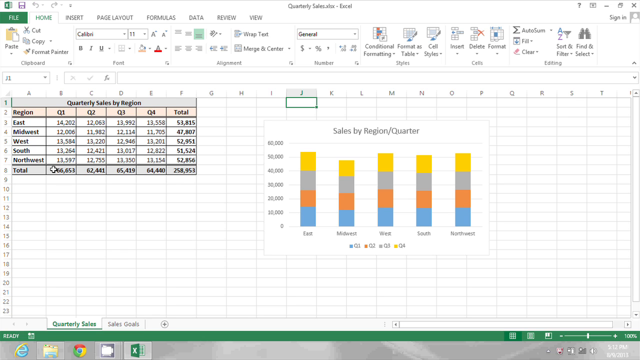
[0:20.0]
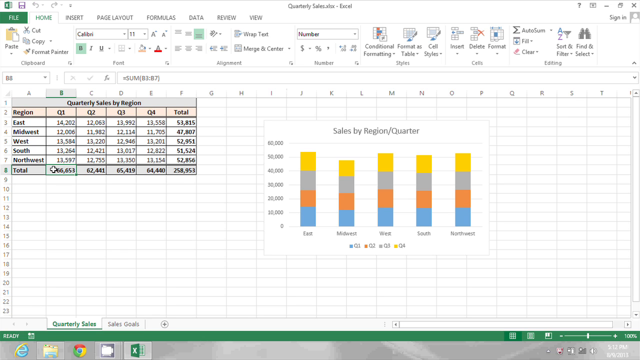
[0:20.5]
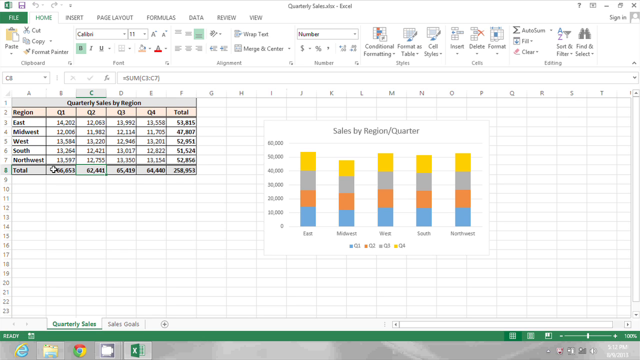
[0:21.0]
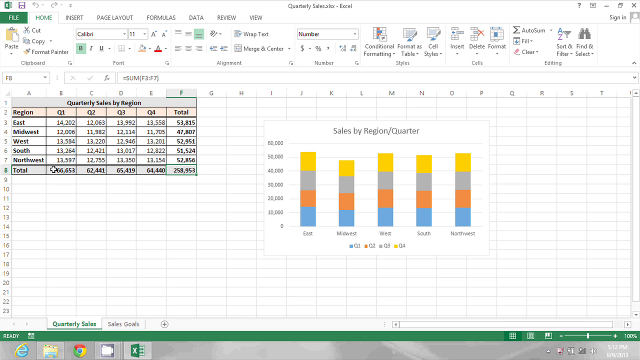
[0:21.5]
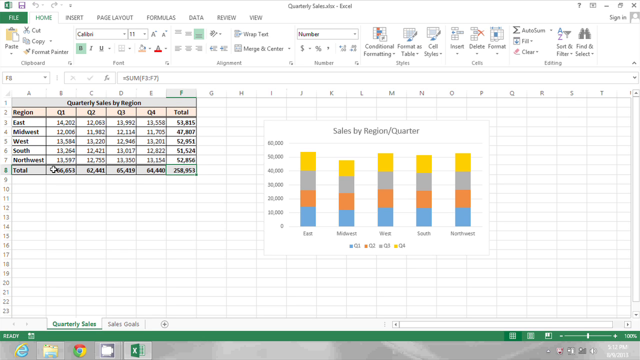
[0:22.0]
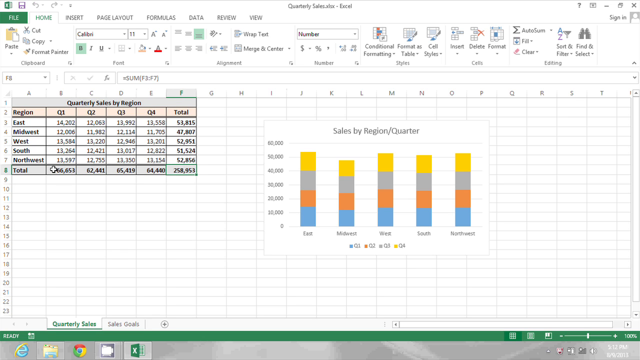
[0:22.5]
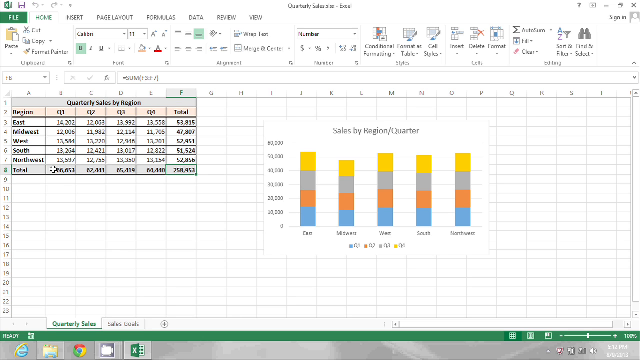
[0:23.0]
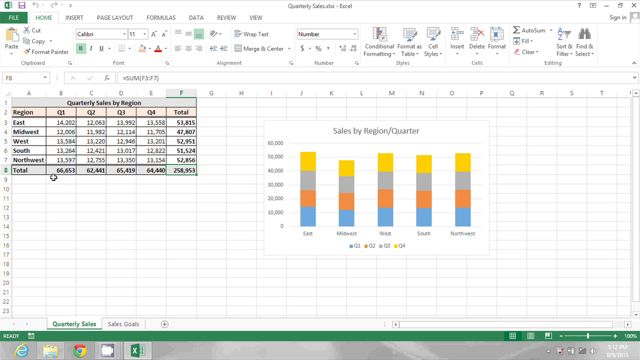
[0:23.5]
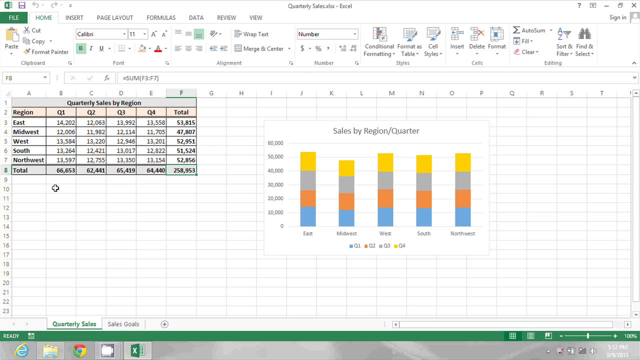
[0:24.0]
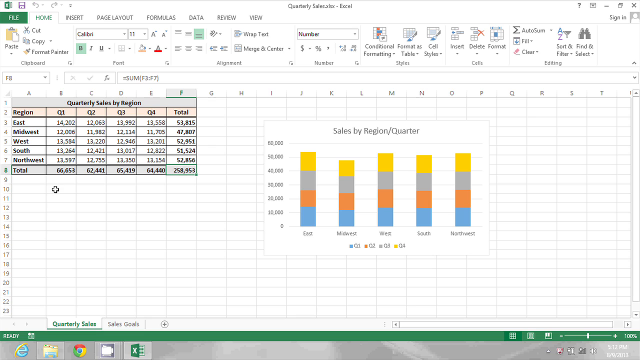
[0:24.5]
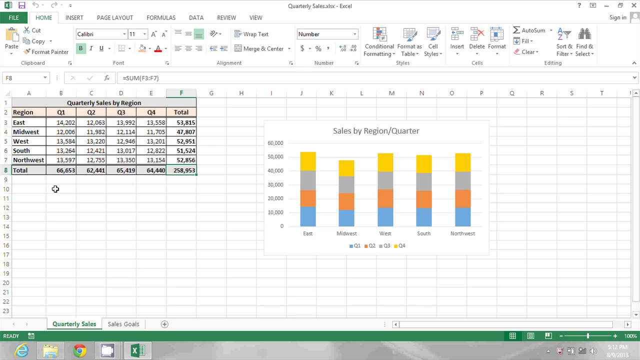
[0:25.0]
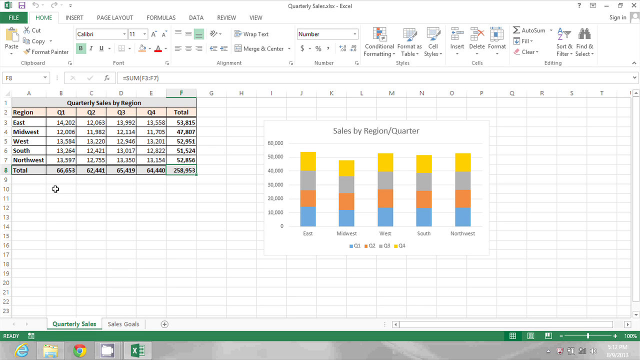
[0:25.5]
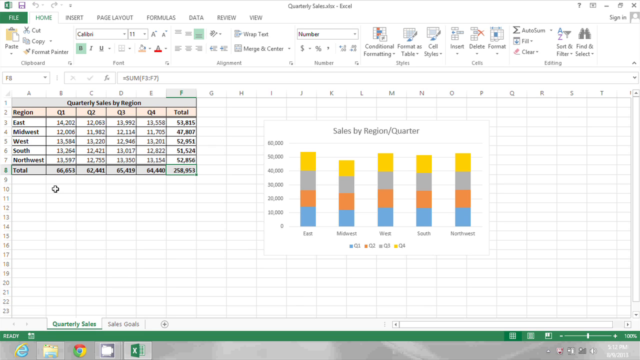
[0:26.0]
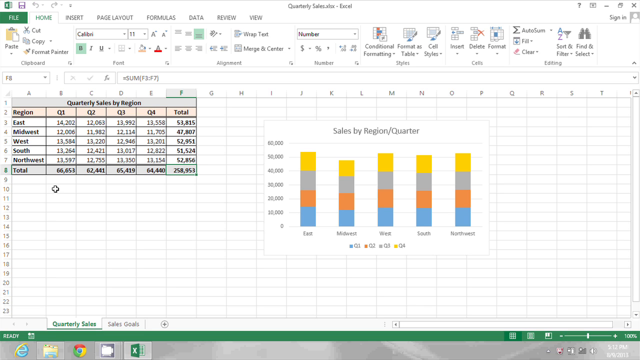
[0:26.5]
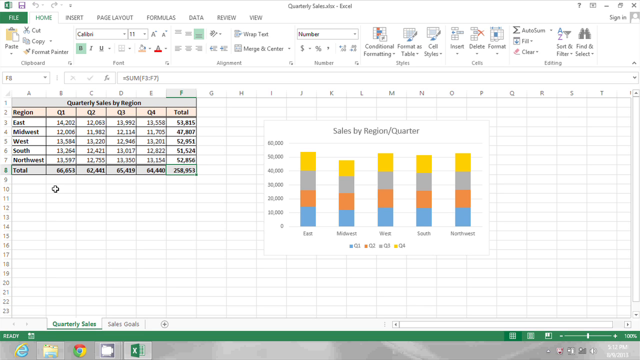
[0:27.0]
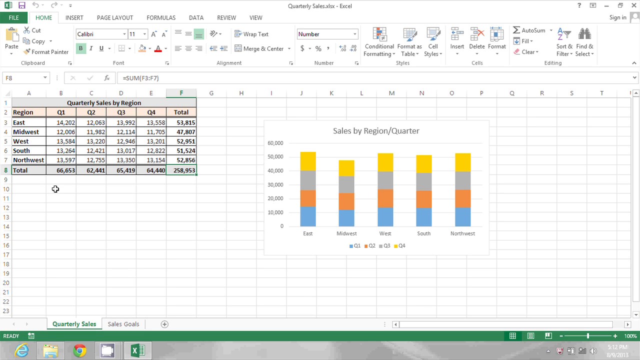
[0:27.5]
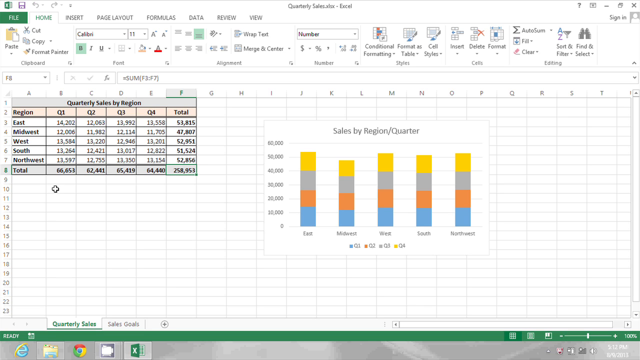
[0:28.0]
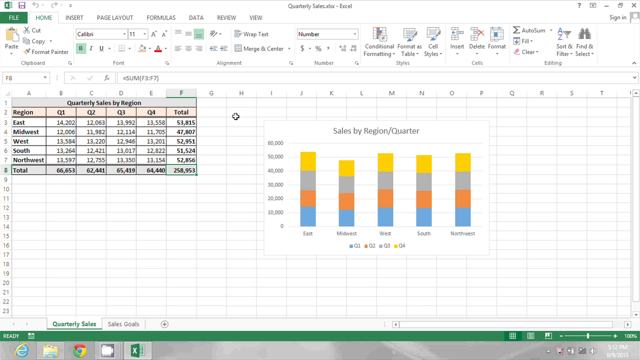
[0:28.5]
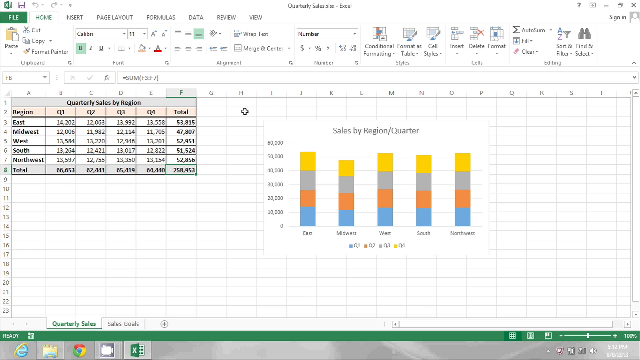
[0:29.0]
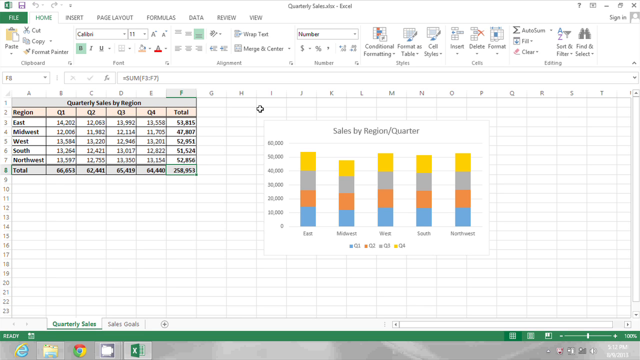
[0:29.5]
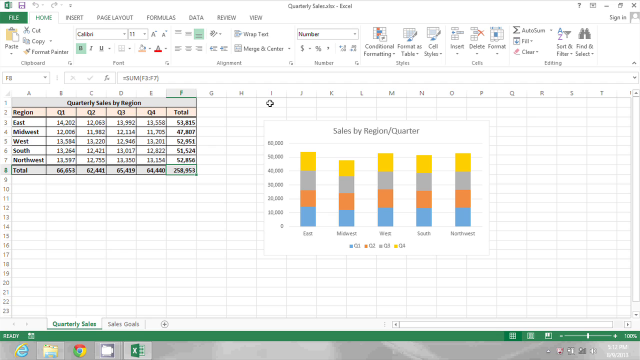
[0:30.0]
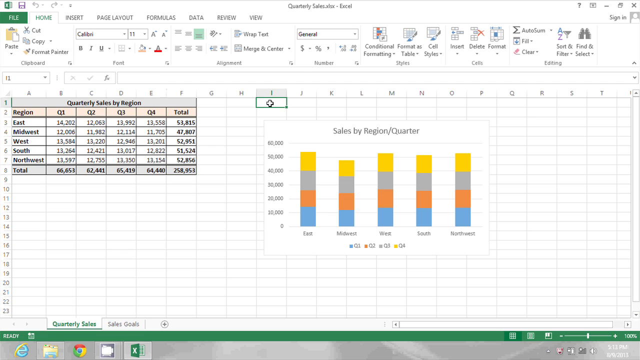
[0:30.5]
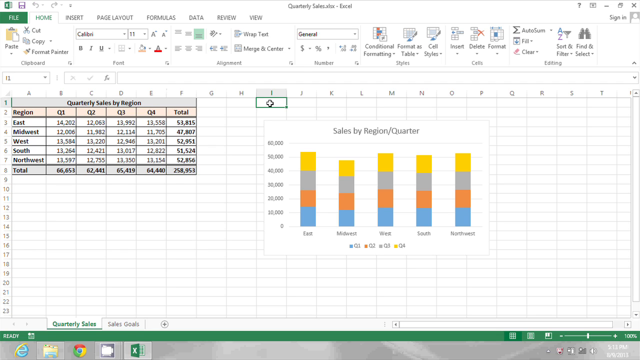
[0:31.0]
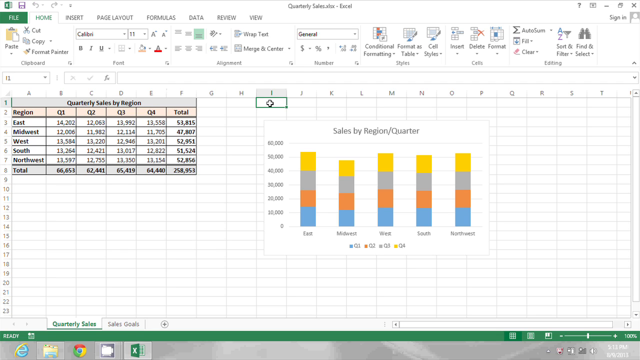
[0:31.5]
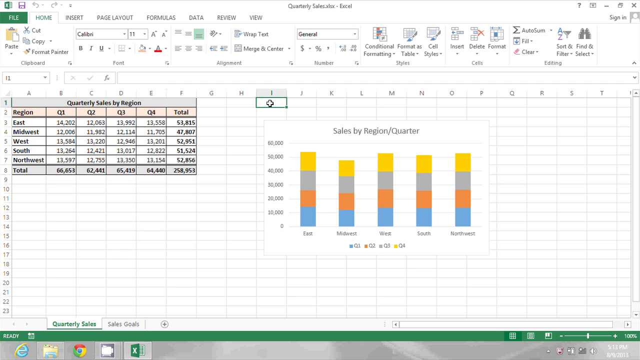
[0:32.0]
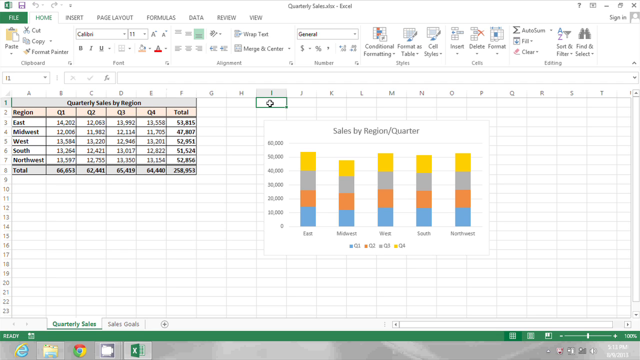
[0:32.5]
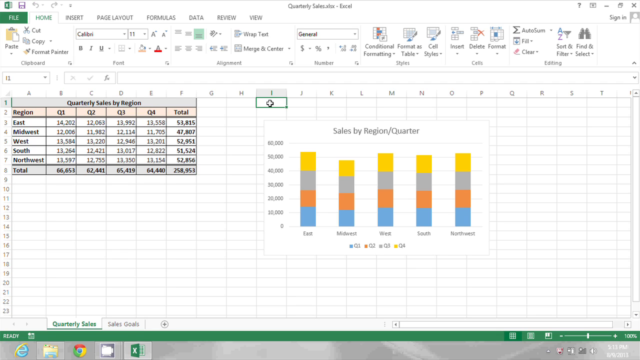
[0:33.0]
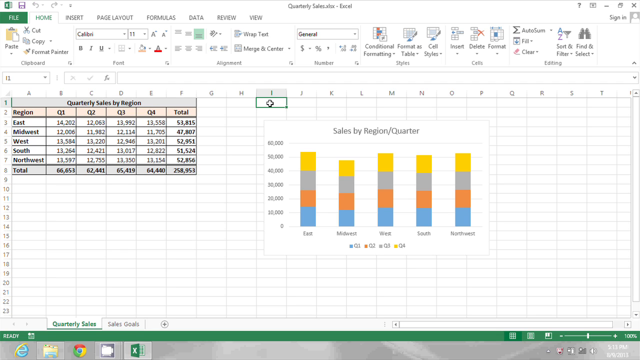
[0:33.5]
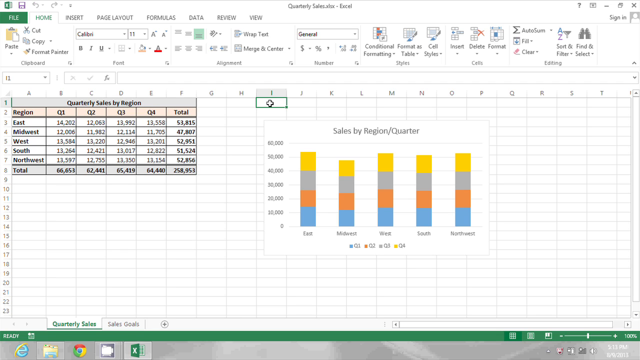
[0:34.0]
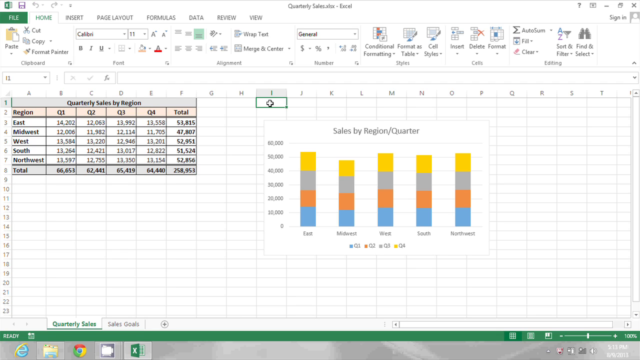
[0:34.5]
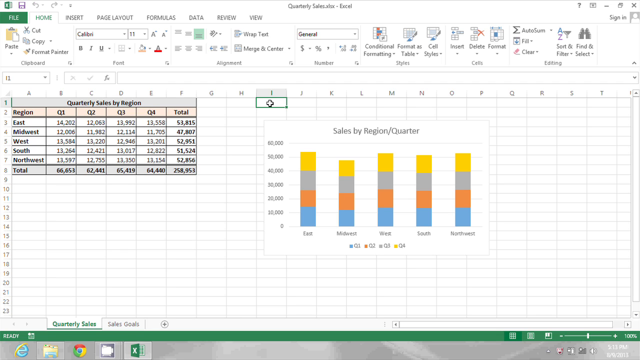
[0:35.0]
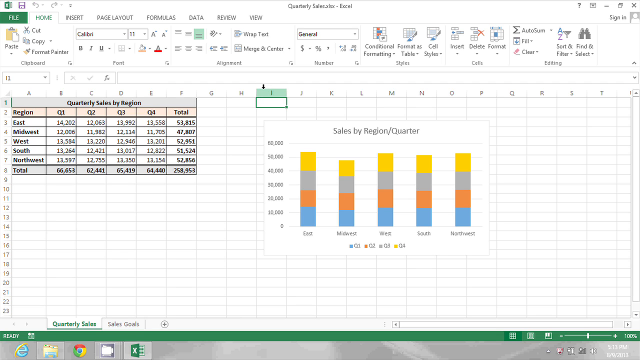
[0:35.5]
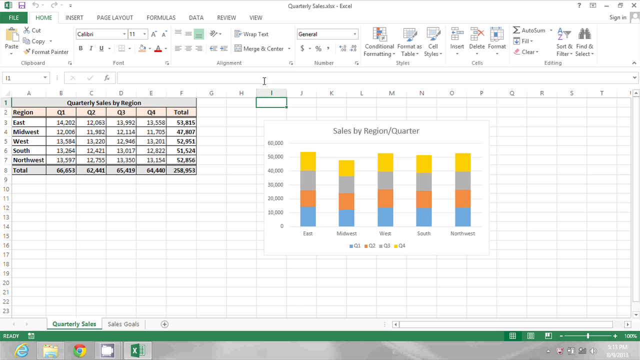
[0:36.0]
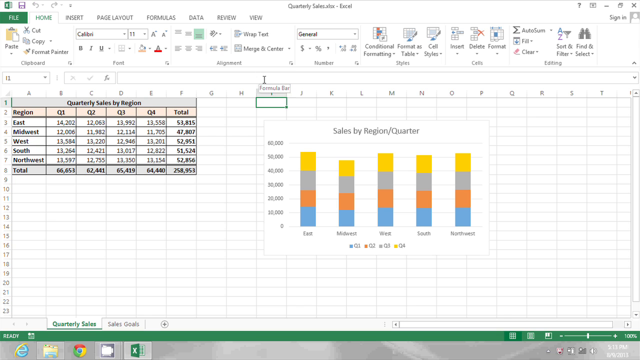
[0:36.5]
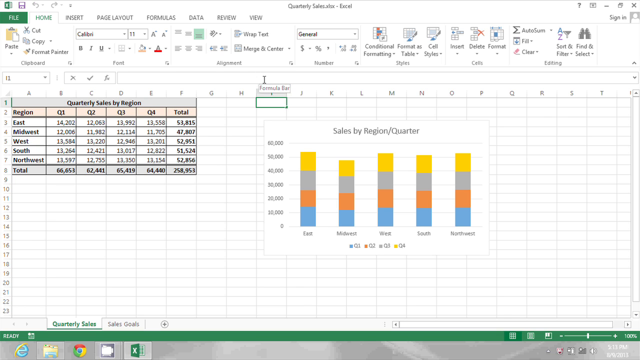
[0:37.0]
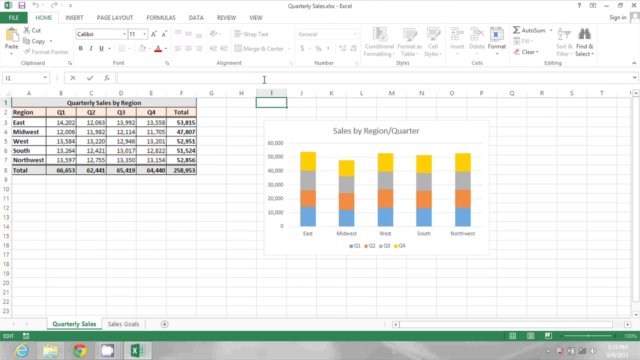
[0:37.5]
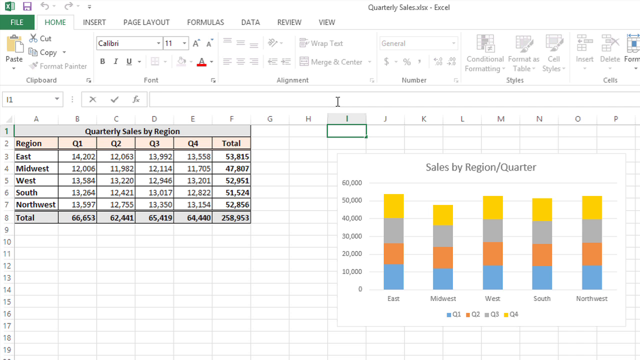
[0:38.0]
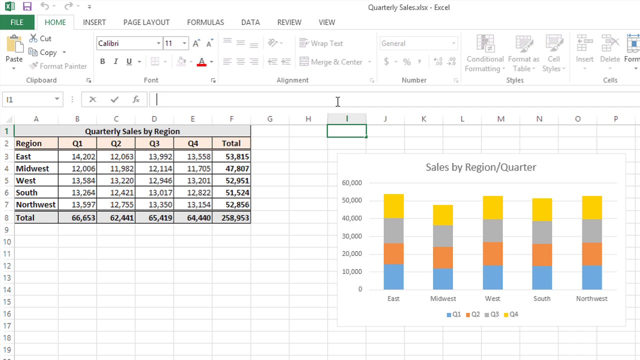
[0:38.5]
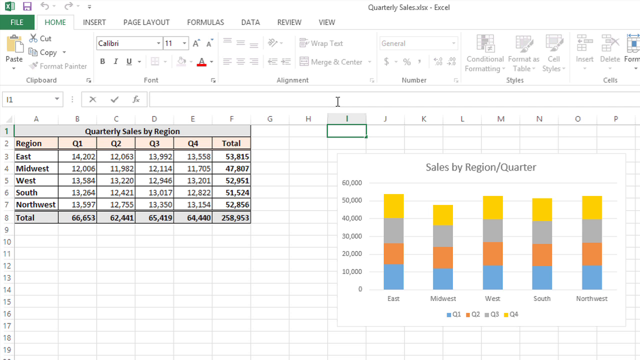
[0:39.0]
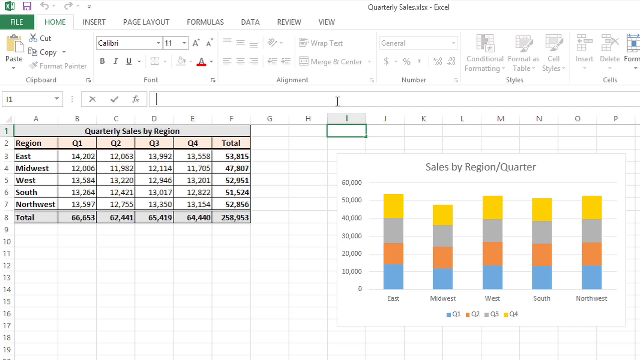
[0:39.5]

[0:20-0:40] Two different graphs are on an Excel spreadsheet. The first shows quarterly sales by region, listing the regions East, Midwest, South and Northwest, with quarter one, quarter two, quarter three, quarter four and the total across the top. For example, East has 14,202 for quarter one and Midwest has 12,066, and a total for all of the regions is shown all the way down to the bottom. The other graph presents the data as a bar graph, with East, Midwest, West, South and Northwest each on a line and color-coded by quarter: quarter one is blue, quarter two orange, quarter three gray and quarter four yellow. The totals range from zero to apparently 80,000, and the Midwest appears to be the worst-performing sales region, slightly below everyone else. The person then uses the mouse pointer to highlight the I part of the graph.